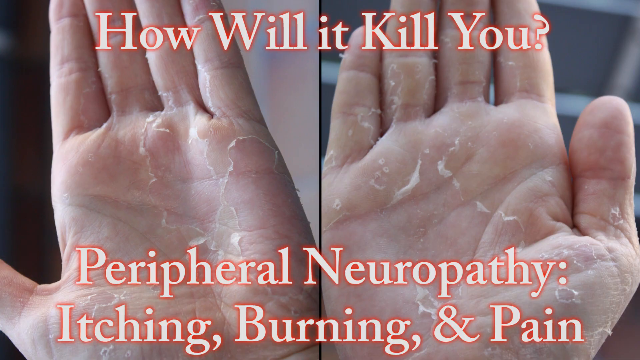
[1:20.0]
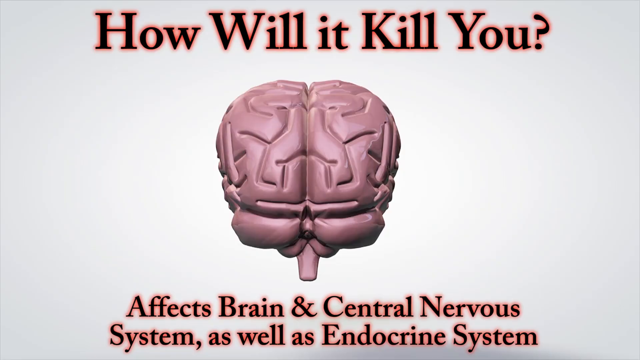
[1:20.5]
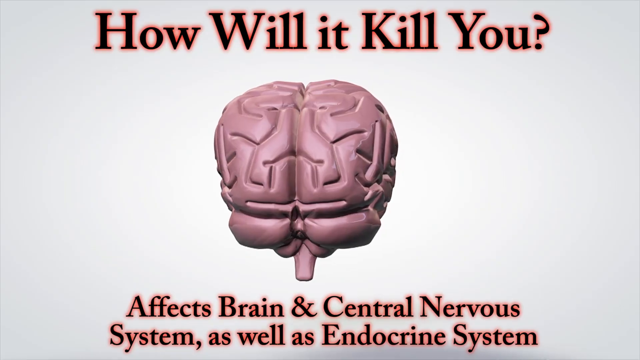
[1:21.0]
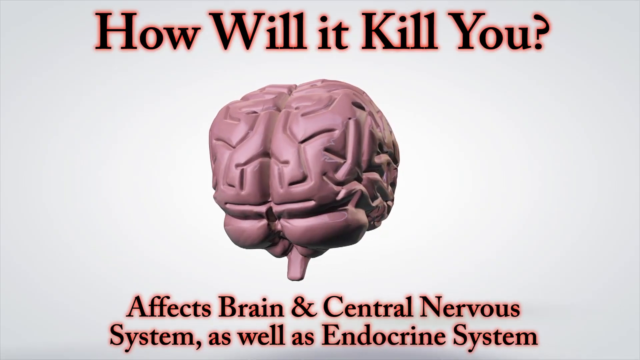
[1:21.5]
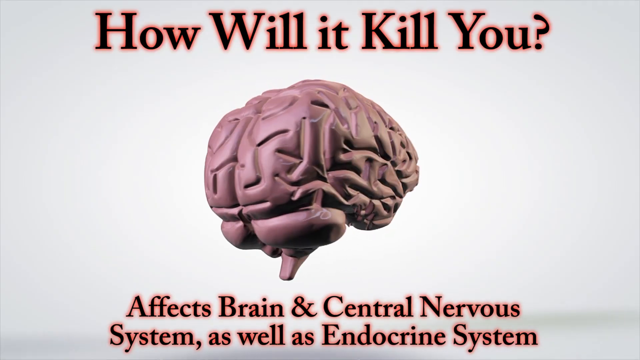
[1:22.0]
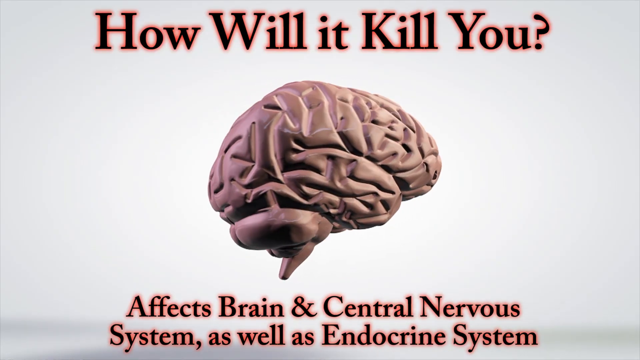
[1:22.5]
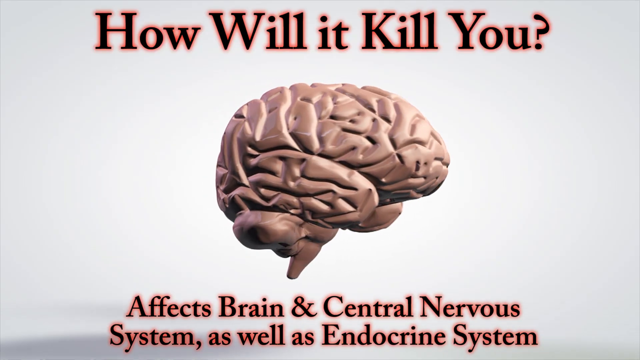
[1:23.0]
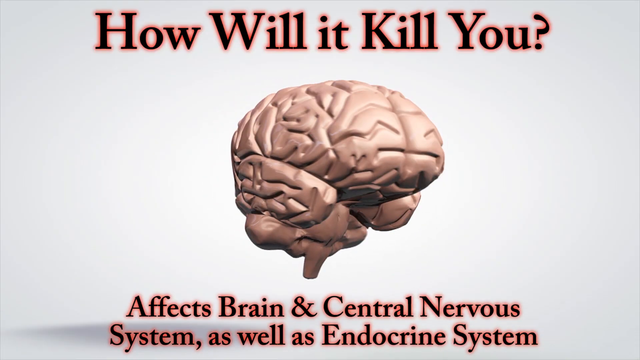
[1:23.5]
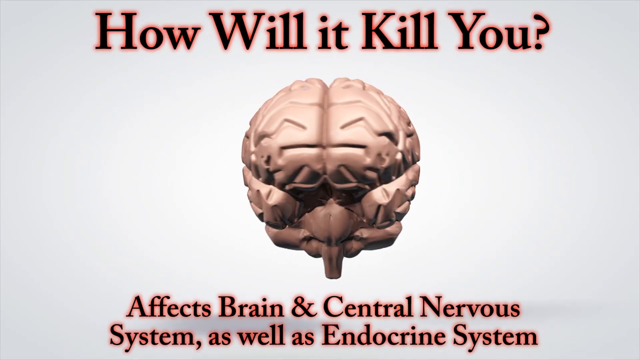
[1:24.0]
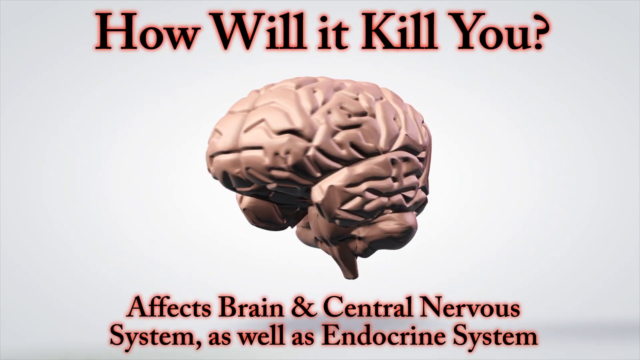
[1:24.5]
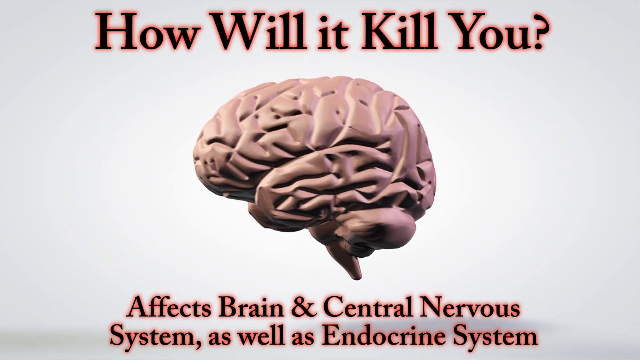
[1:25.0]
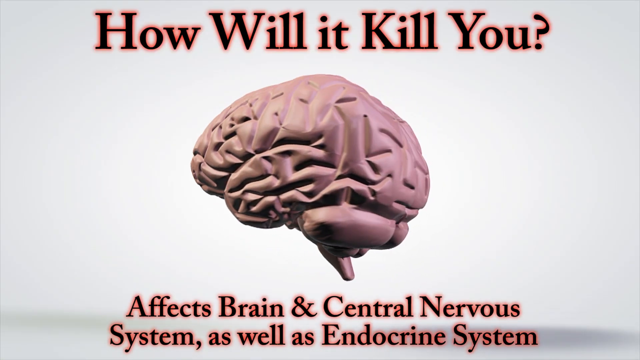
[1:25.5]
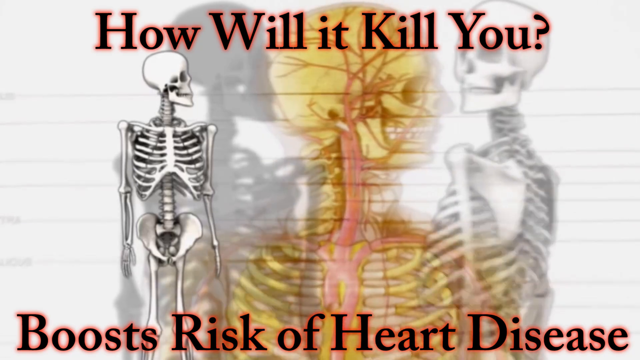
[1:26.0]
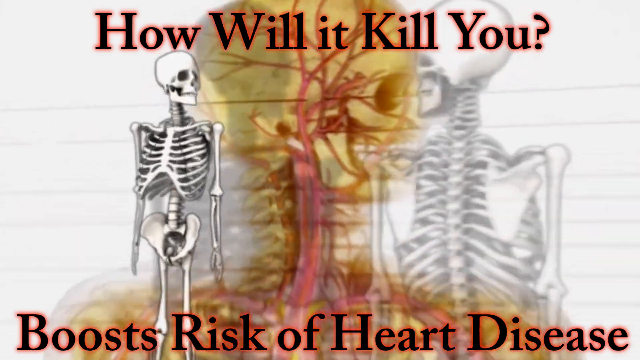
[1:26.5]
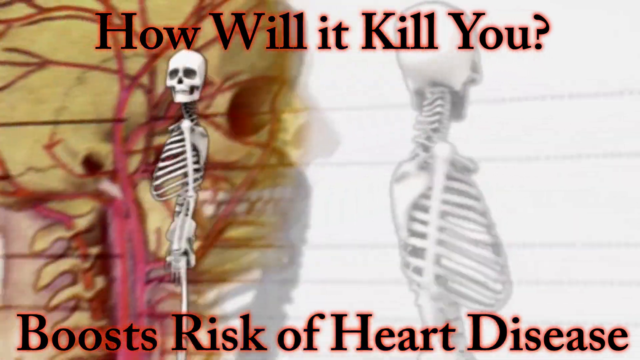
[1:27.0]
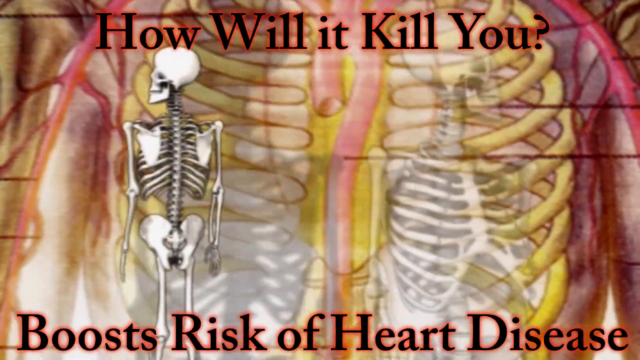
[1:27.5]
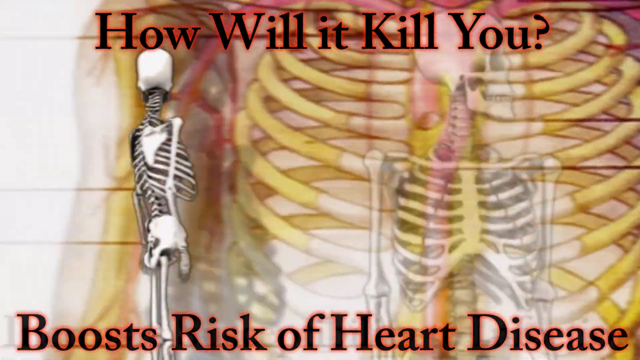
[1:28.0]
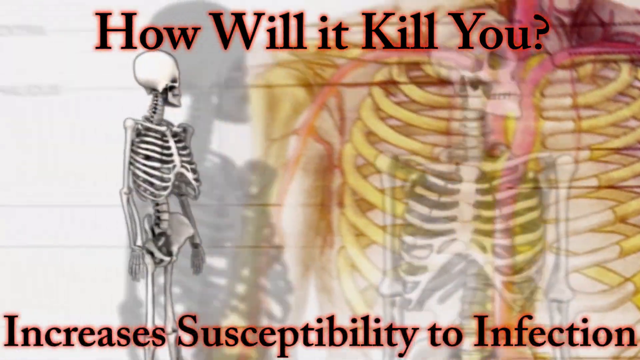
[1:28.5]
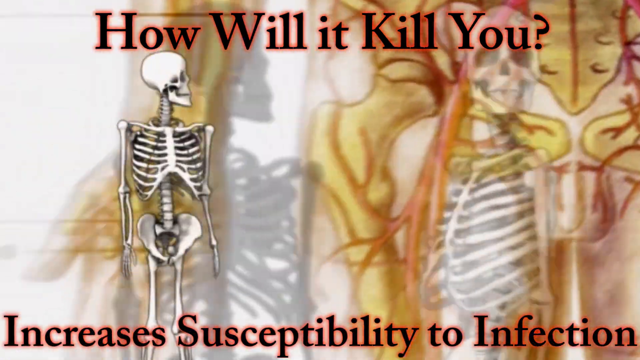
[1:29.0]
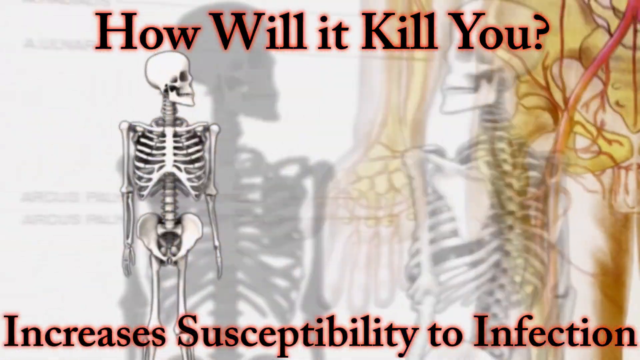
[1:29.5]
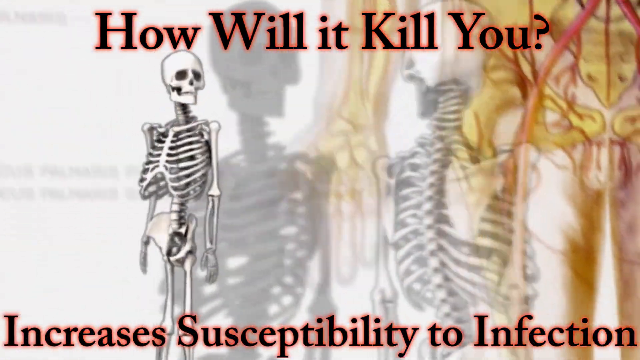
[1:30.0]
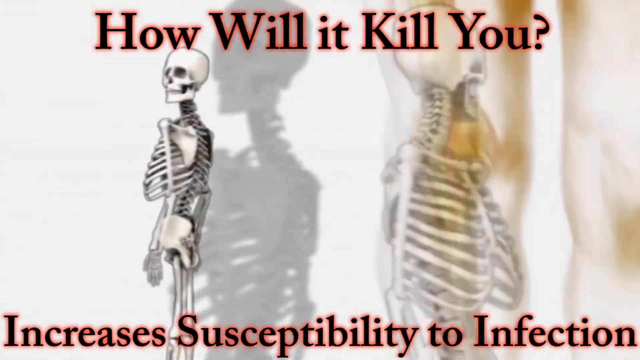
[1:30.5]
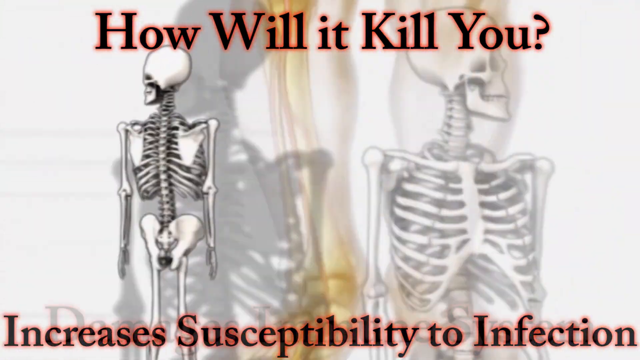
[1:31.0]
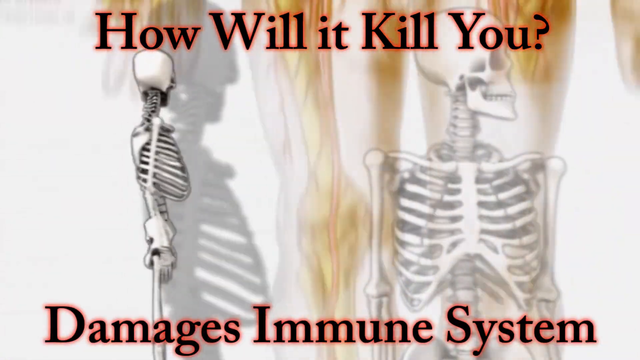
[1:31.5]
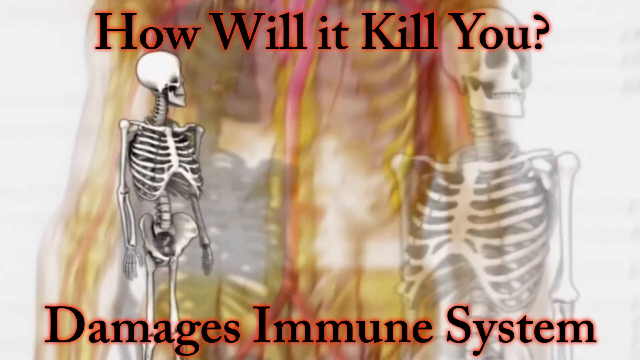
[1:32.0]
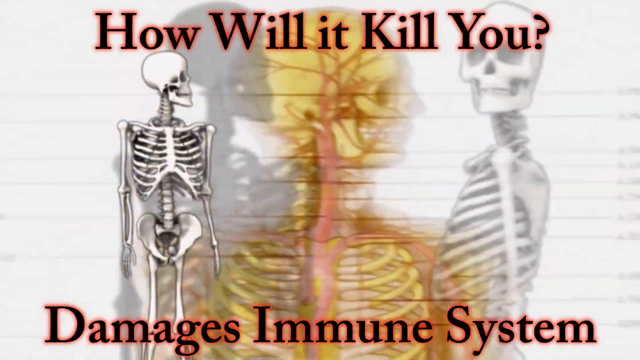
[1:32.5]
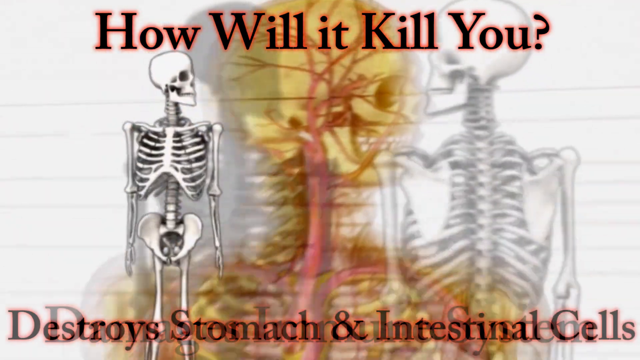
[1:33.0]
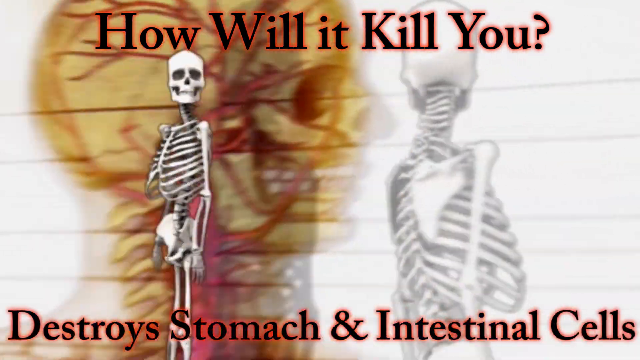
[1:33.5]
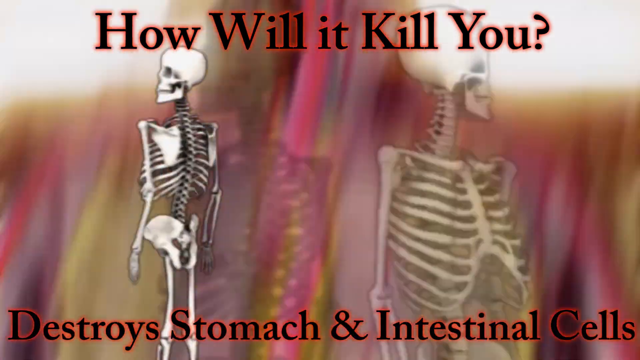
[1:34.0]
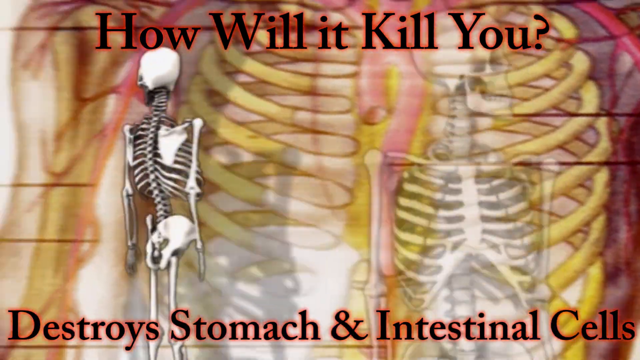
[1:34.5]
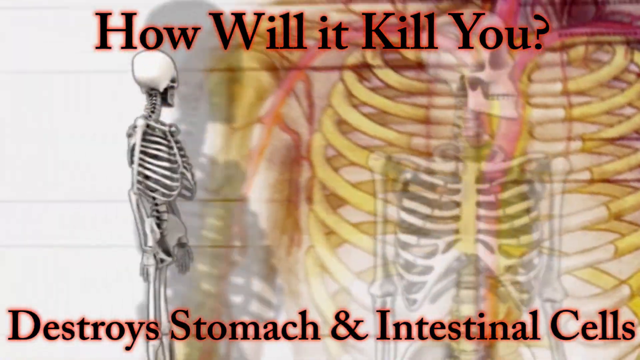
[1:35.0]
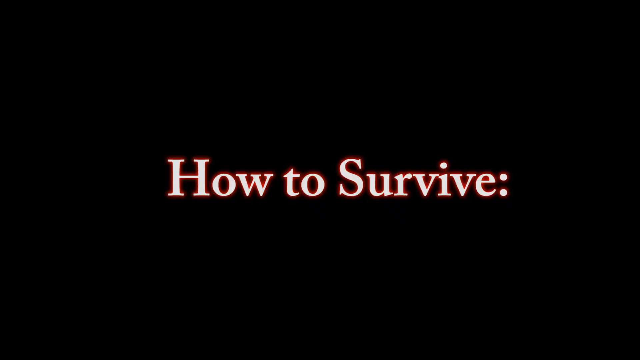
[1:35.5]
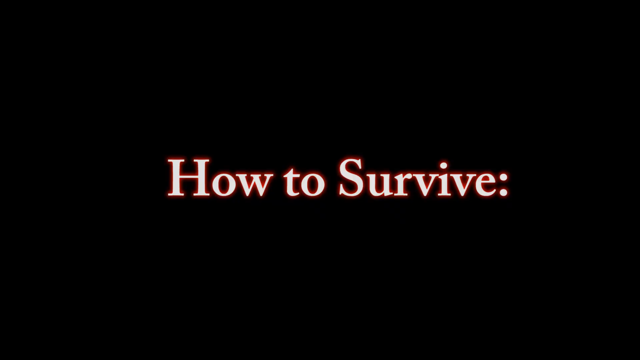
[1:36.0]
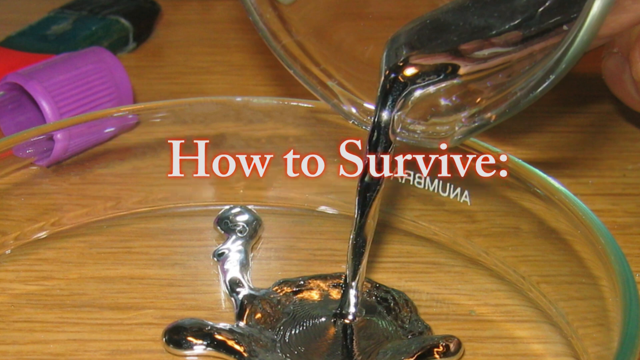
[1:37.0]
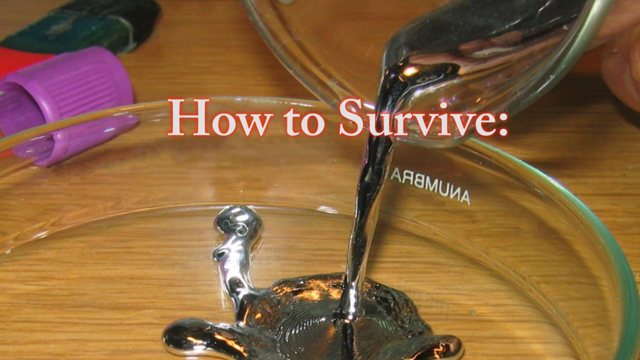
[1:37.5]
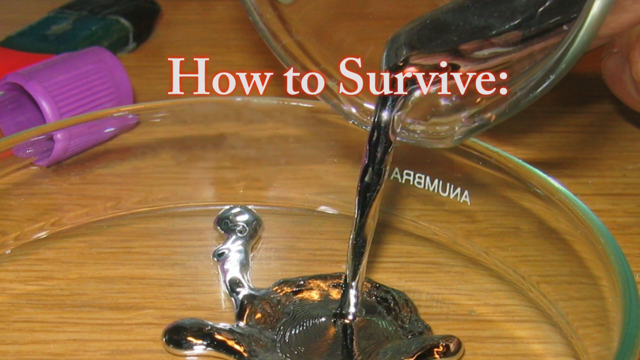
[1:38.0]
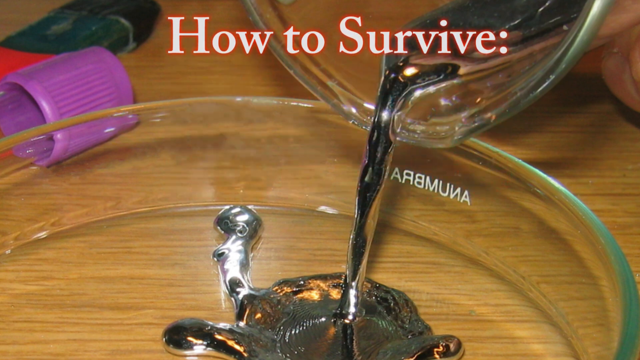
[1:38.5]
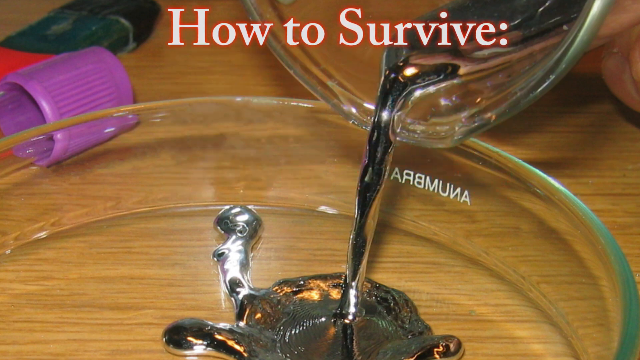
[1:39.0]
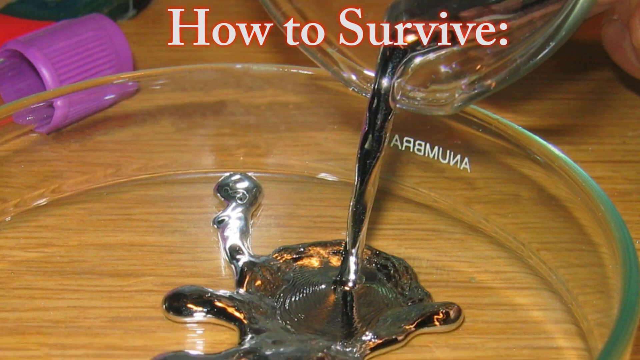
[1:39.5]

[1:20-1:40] Text states that people who eat fish every day are at higher risk of mercury poisoning. The signs of mercury poisoning listed are peeling of the palms, itching, burning and pain, swelling of the hands and feet, and peripheral neuropathy. The video states that mercury affects the brain and central nervous system as well as the endocrine system, that besides the brain it raises the risk of heart disease, that it increases susceptibility to infections, and that it destroys stomach and intestinal cells. Then it says "how to survive", advising against eating fish every day and to make sure fish comes from sources free of mercury.